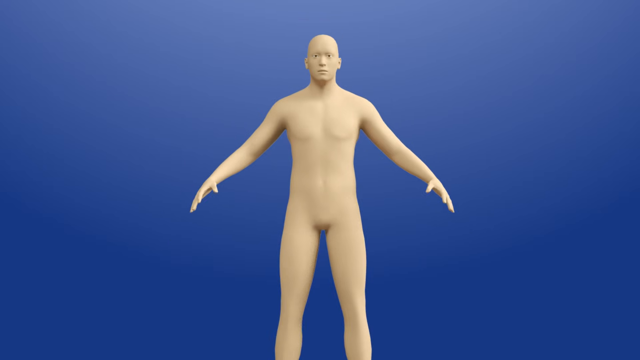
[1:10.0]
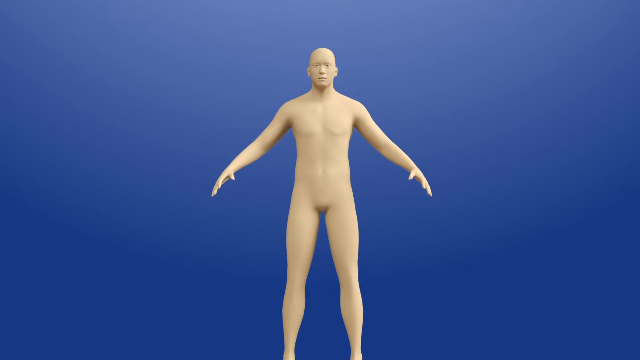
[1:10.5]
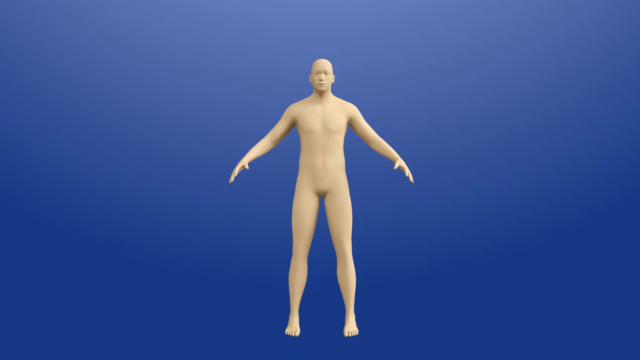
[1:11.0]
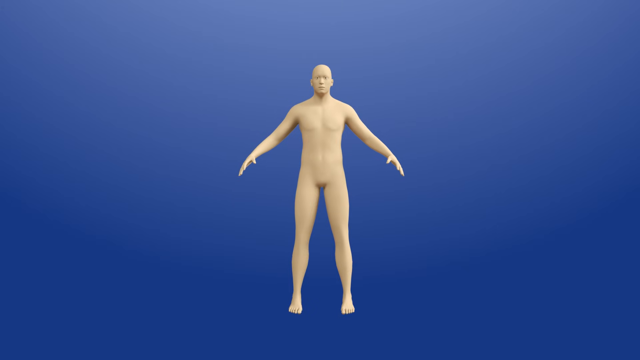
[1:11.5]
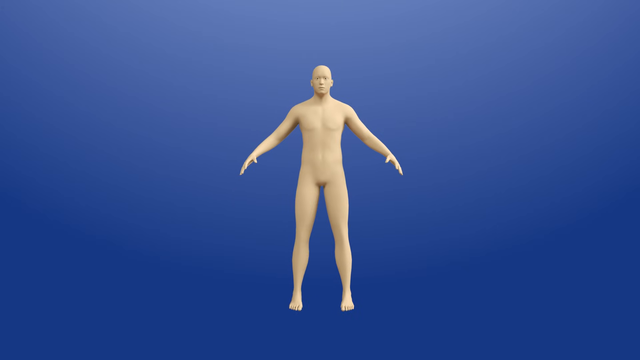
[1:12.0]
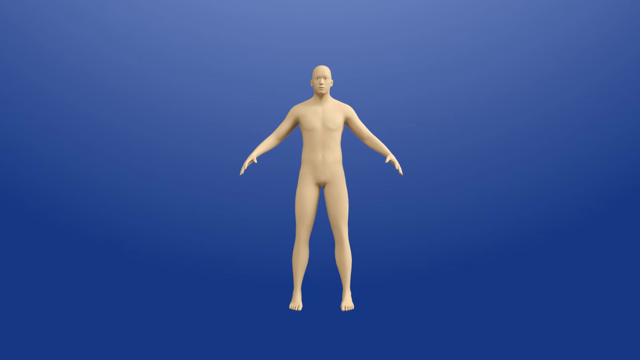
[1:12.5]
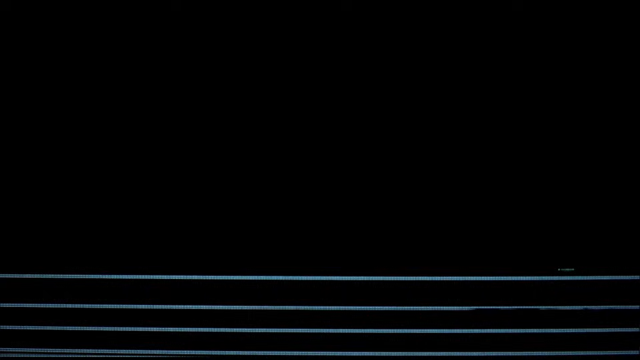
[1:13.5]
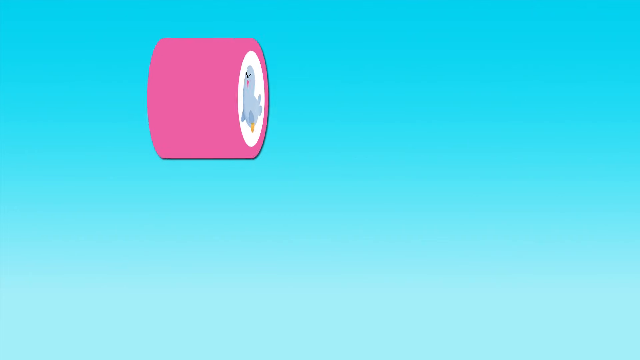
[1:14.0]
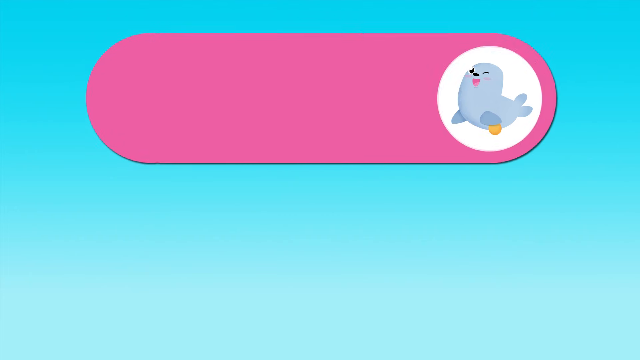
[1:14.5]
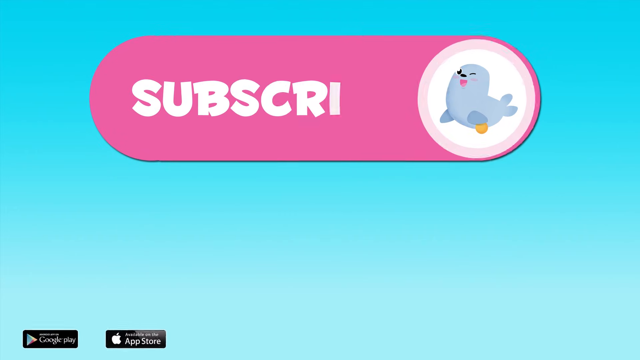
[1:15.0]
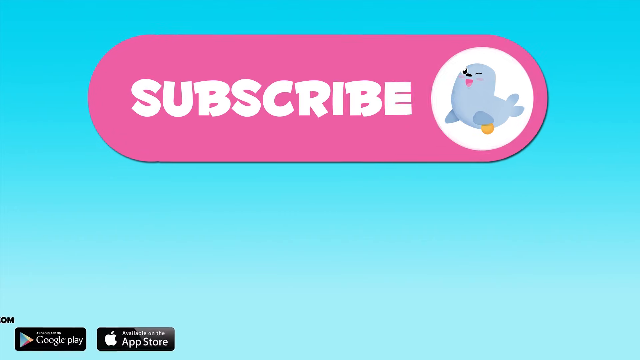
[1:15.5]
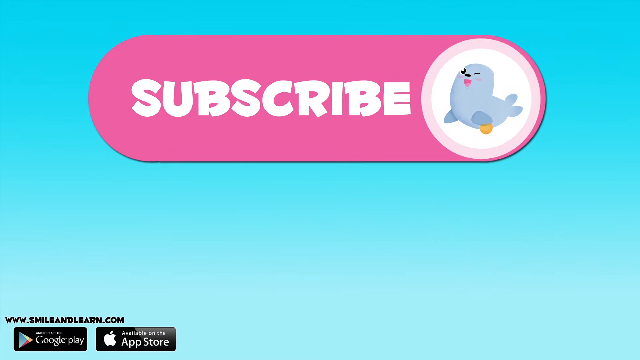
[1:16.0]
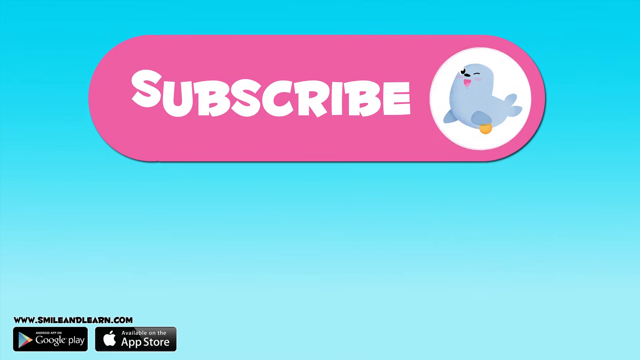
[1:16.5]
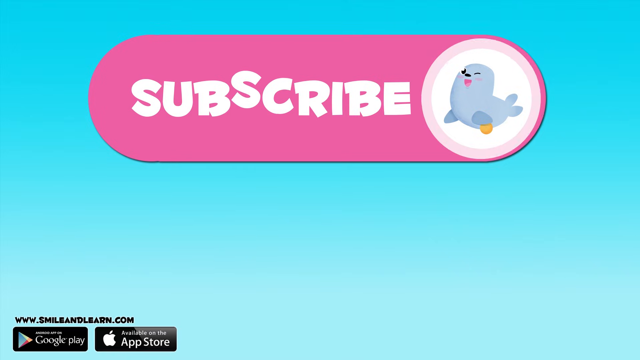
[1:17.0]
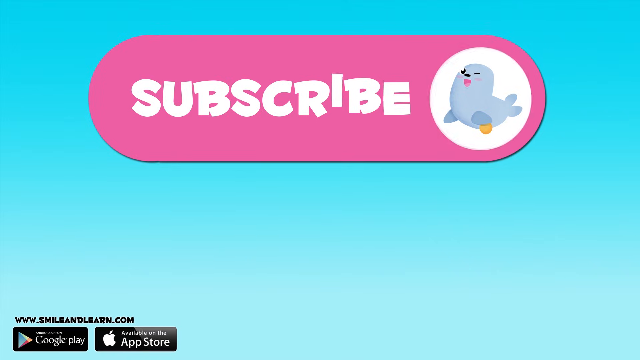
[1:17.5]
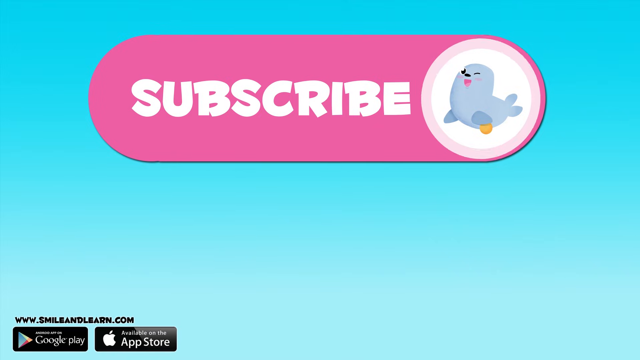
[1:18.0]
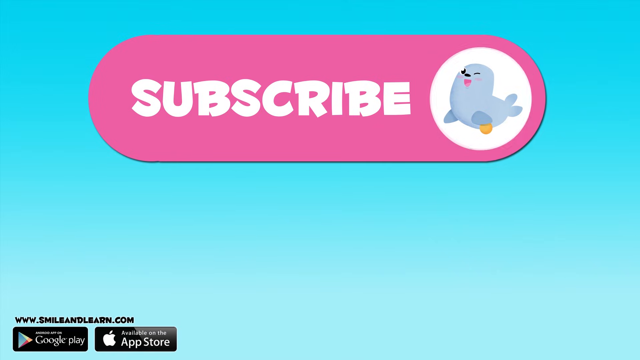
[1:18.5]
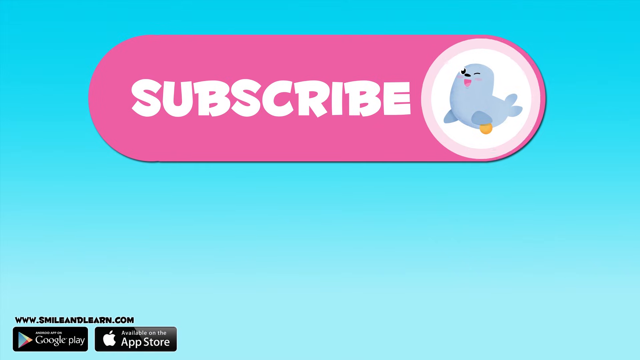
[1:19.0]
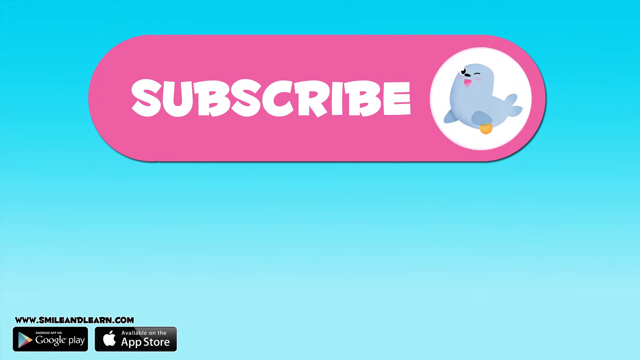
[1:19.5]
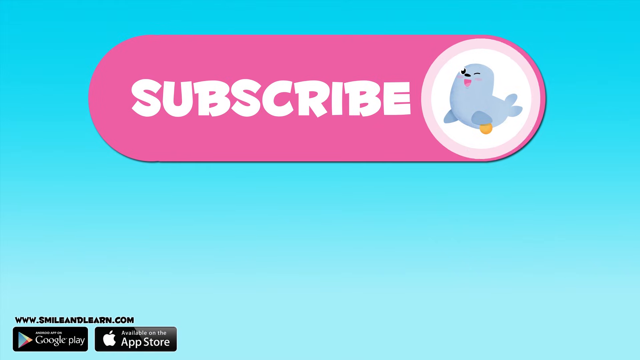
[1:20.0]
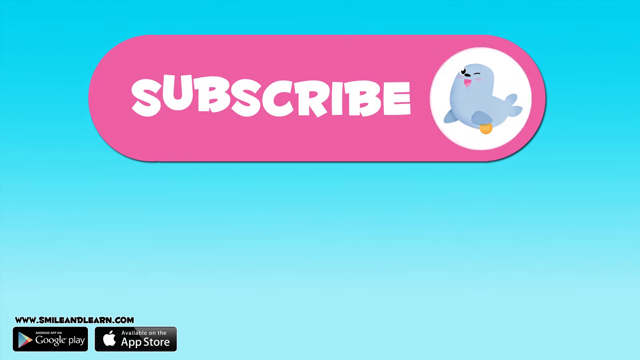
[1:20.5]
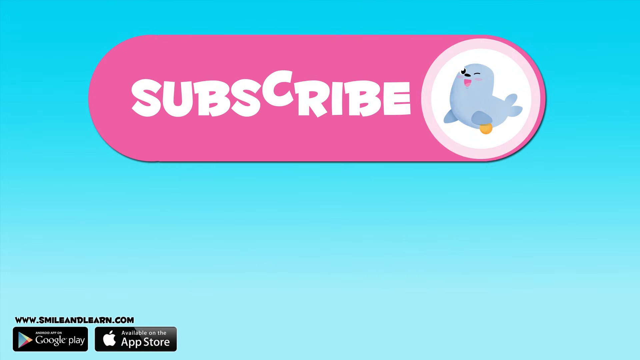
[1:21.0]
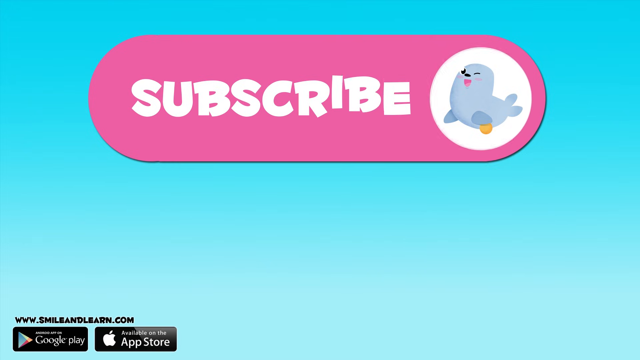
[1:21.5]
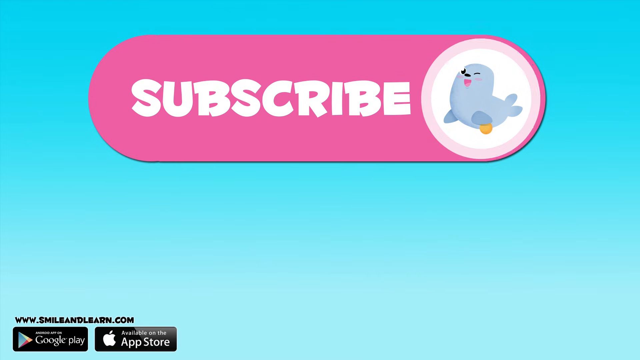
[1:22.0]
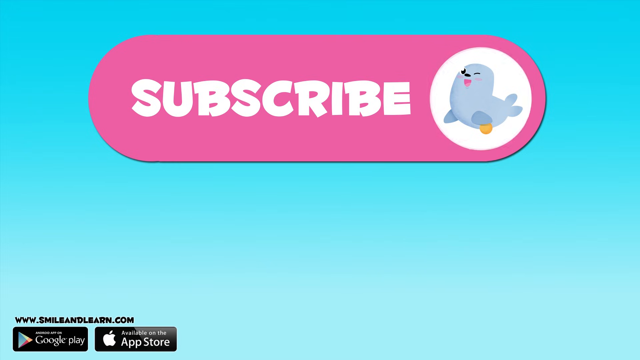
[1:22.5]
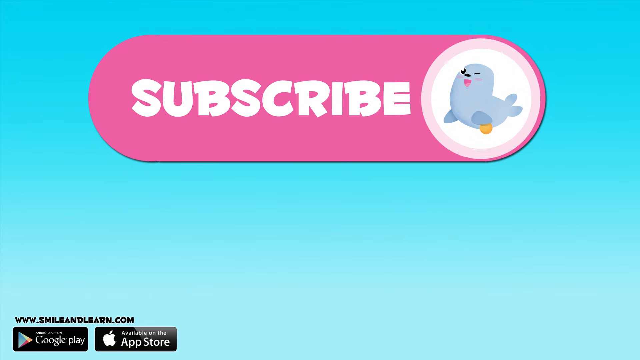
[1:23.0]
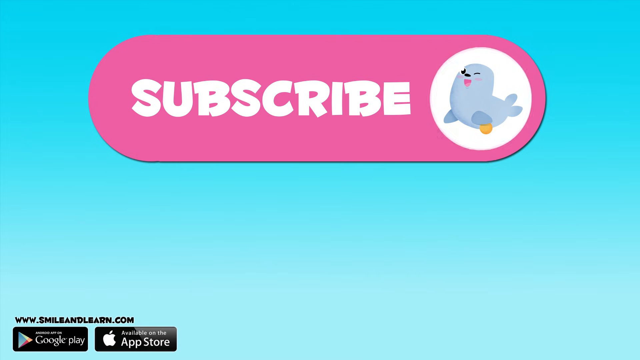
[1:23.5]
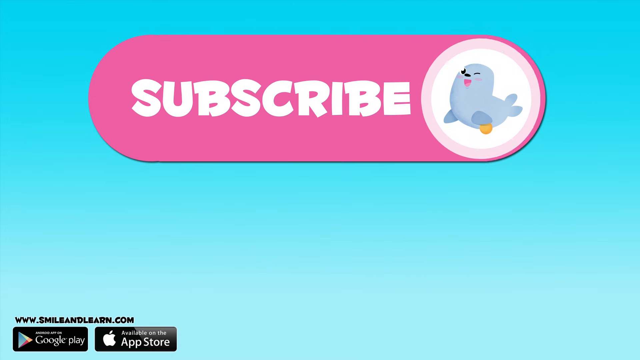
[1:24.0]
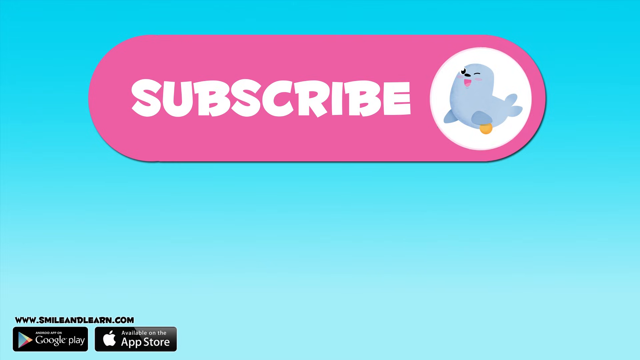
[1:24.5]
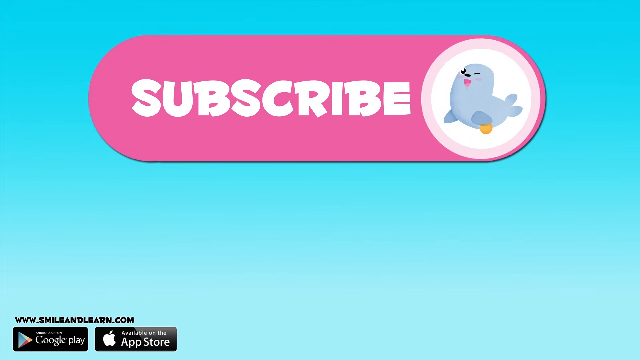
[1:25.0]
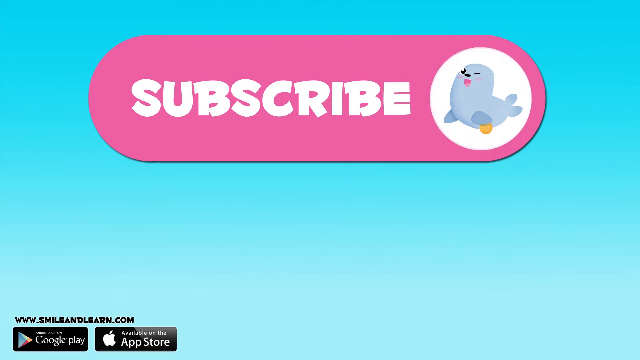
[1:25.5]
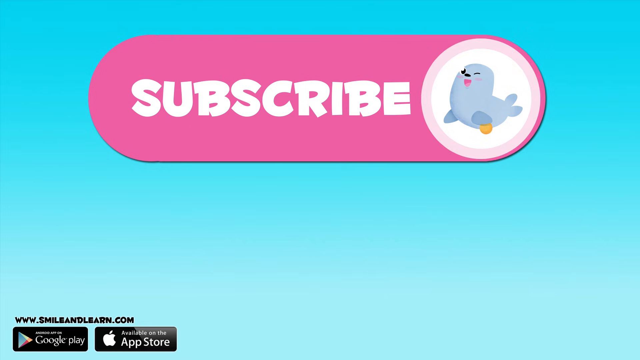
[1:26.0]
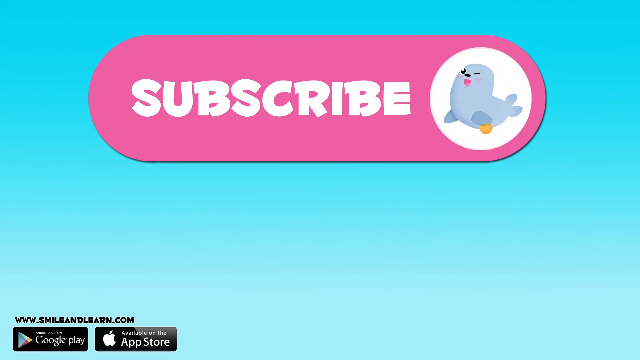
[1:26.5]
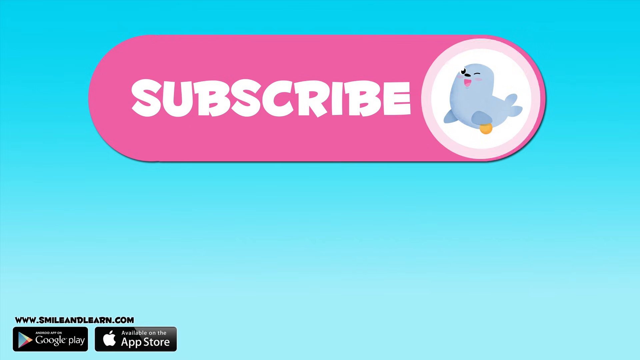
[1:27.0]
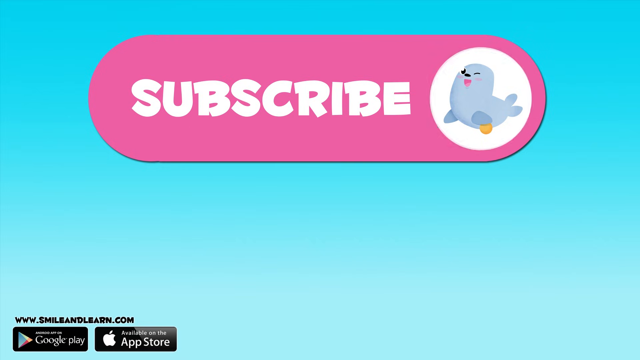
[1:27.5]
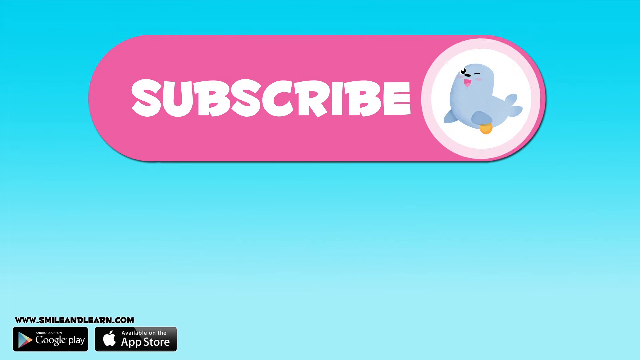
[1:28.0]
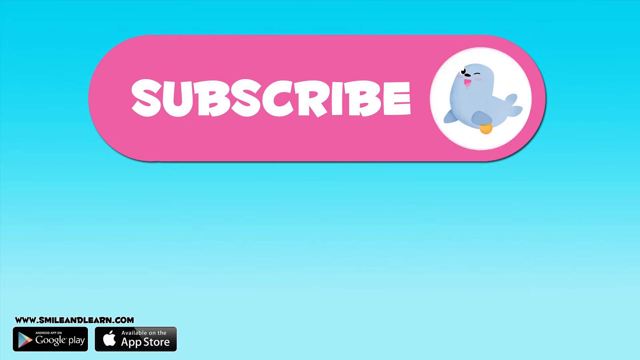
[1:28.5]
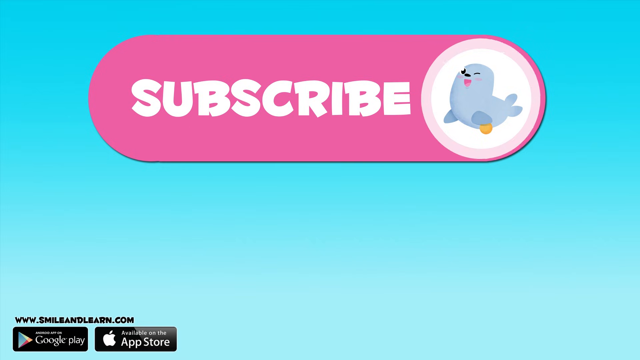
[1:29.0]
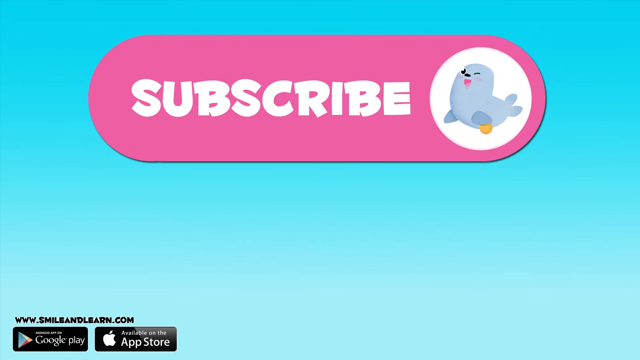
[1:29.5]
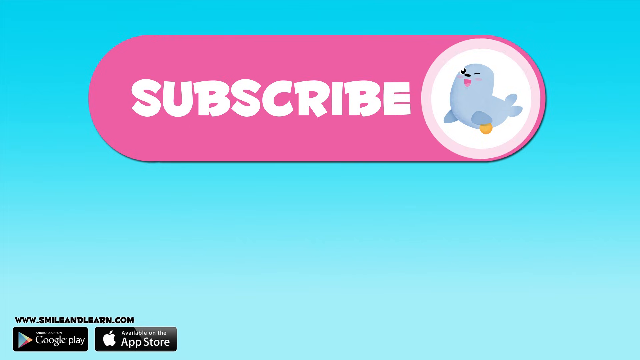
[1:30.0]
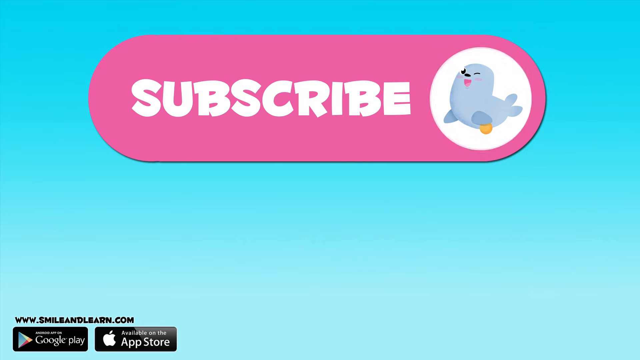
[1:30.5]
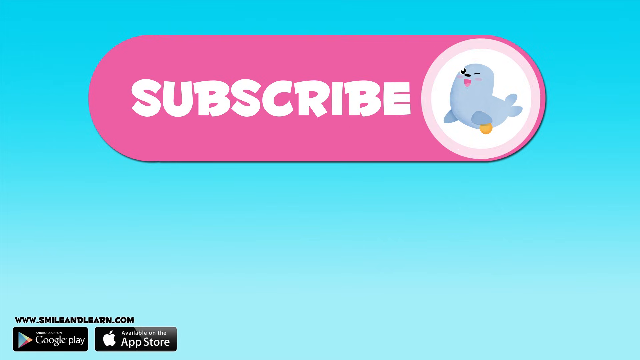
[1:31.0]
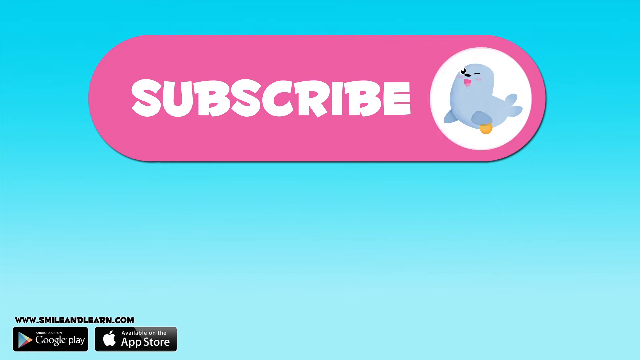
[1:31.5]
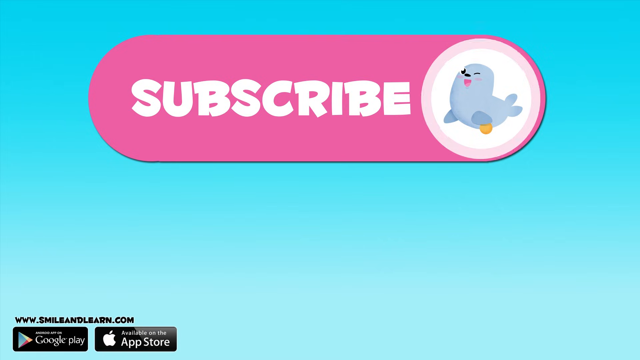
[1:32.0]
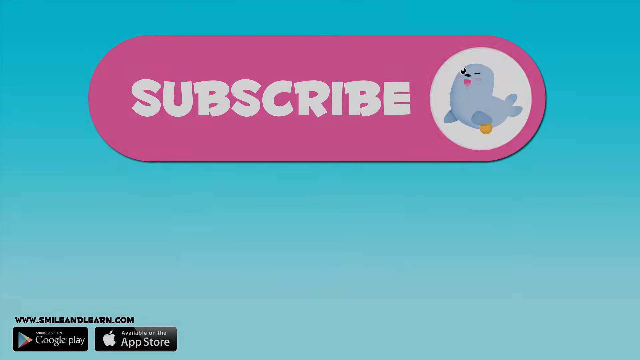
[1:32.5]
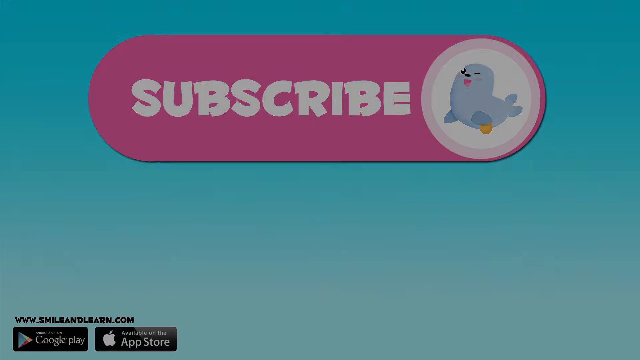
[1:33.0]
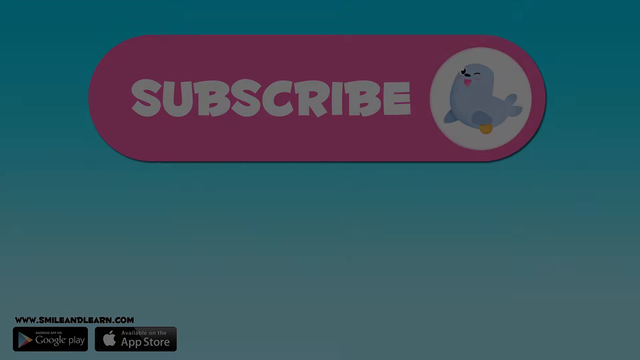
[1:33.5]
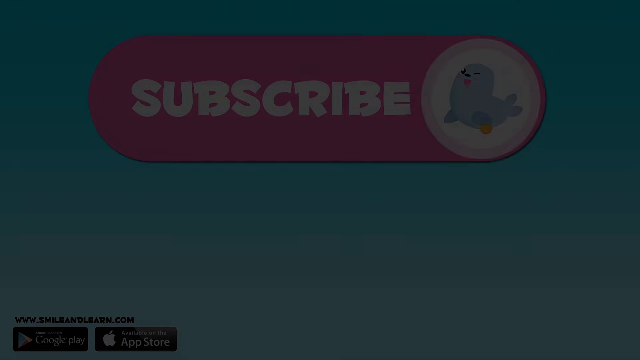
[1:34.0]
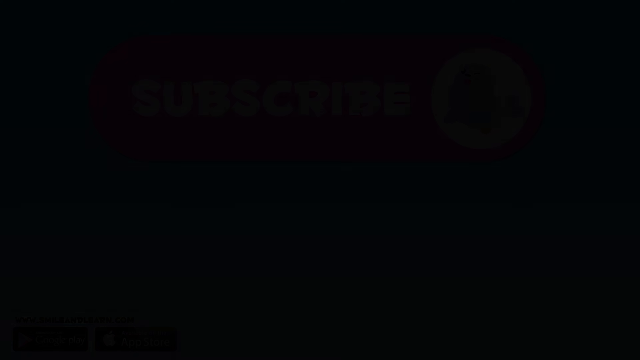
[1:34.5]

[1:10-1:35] A normal human body with white skin appears again. A goodbye screen follows, with a subscribe icon on a pink background. The blue seal appears again, smiling at the viewer. The scene is very dynamic, with a subscribe button. The website "www.smileandlearn.com" is visible, and the app appears to be available to download on Google Play and the App Store. There is also a blue background under the subscribe icon.